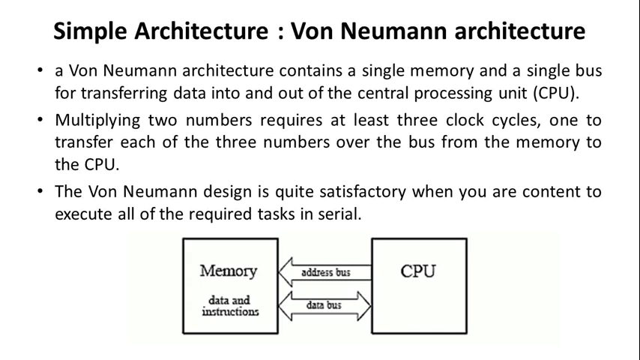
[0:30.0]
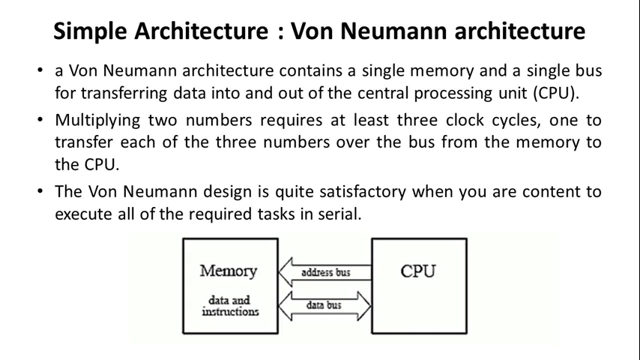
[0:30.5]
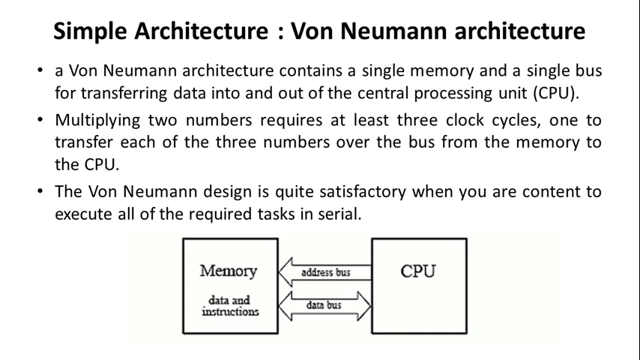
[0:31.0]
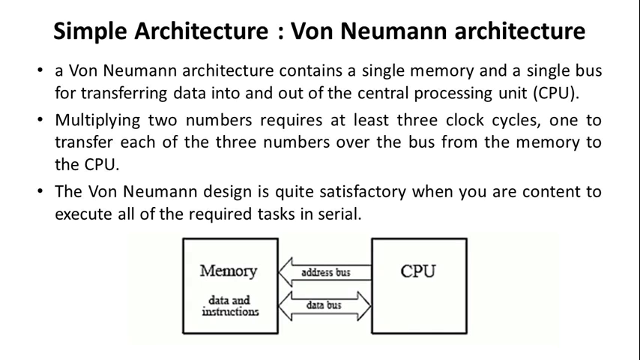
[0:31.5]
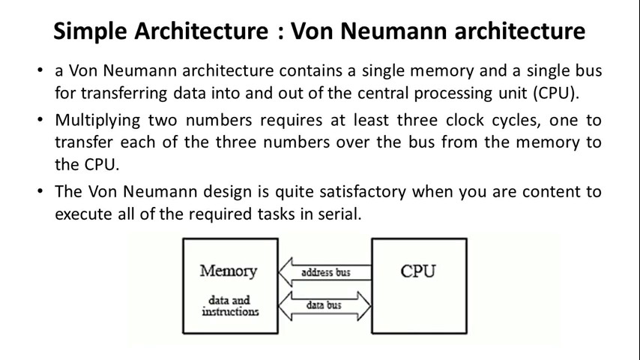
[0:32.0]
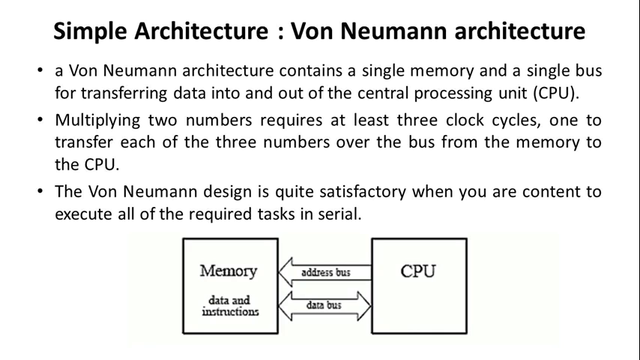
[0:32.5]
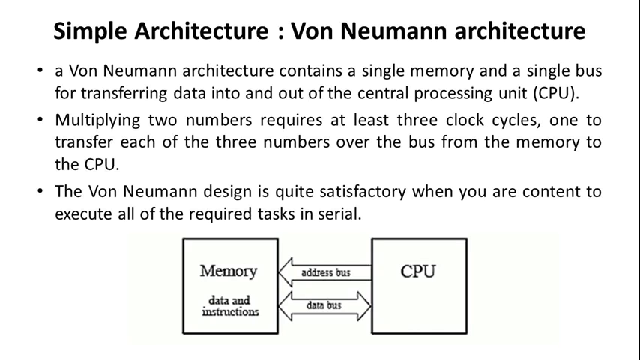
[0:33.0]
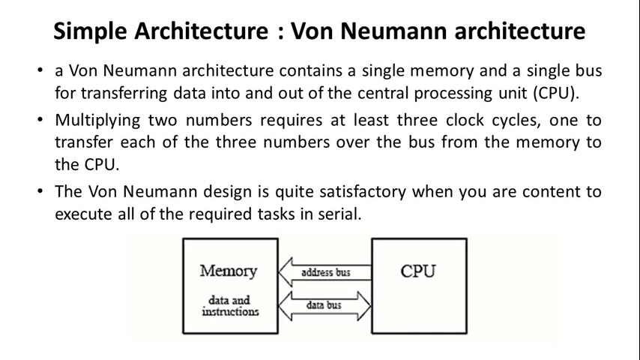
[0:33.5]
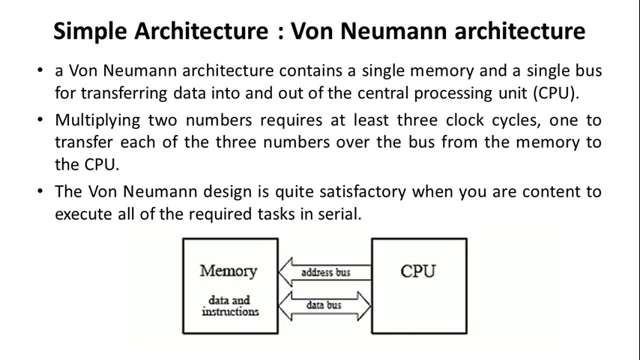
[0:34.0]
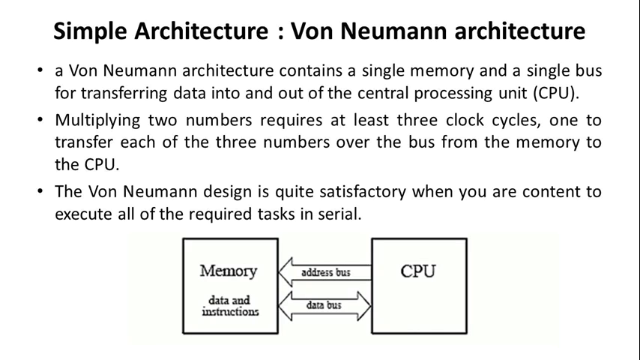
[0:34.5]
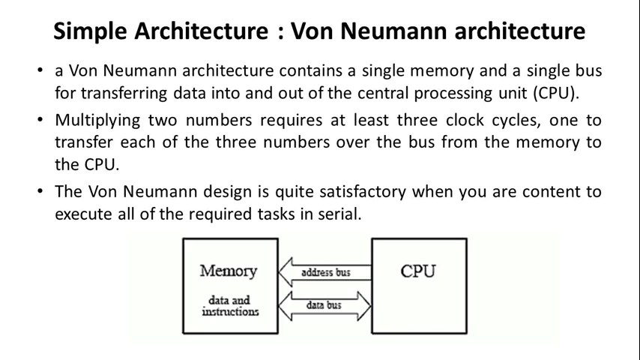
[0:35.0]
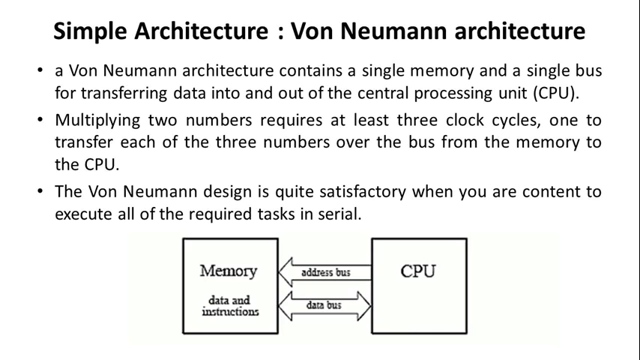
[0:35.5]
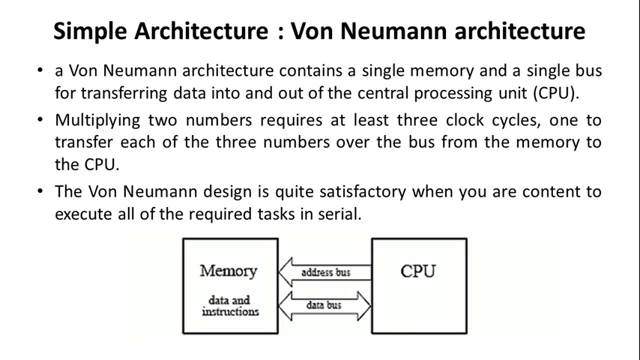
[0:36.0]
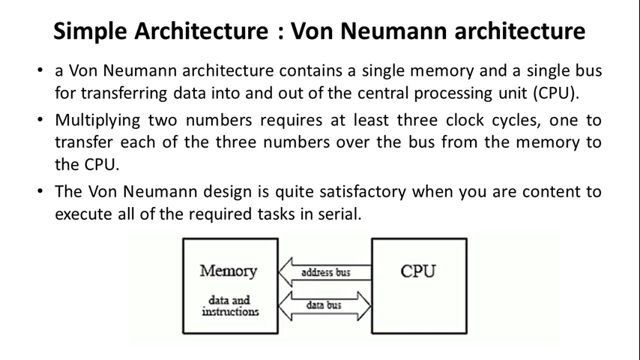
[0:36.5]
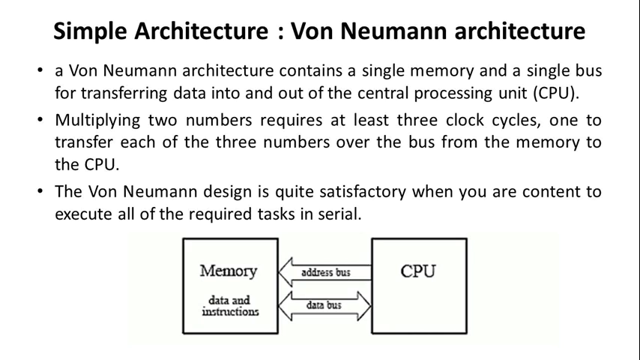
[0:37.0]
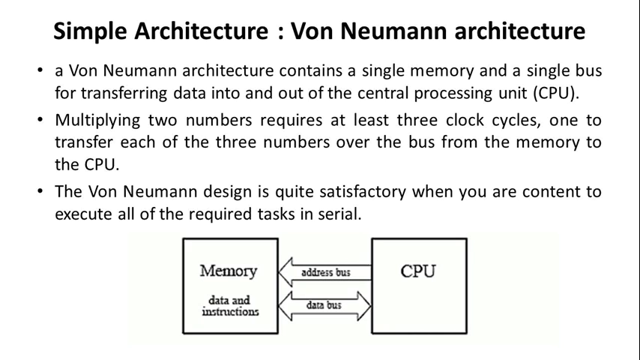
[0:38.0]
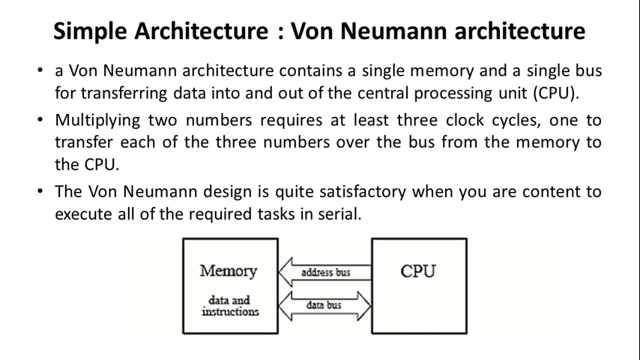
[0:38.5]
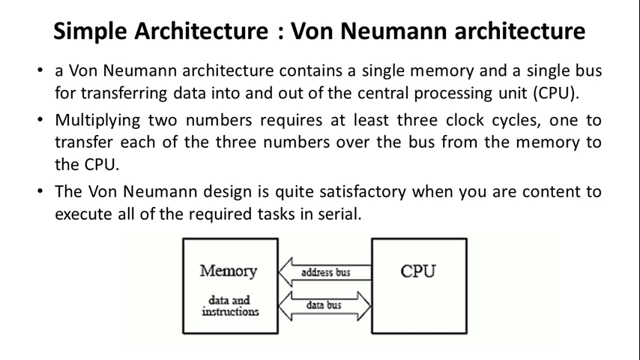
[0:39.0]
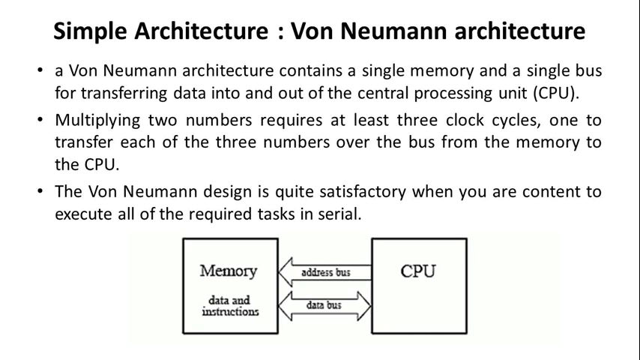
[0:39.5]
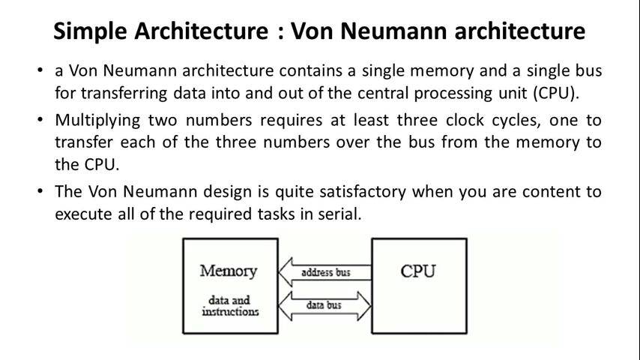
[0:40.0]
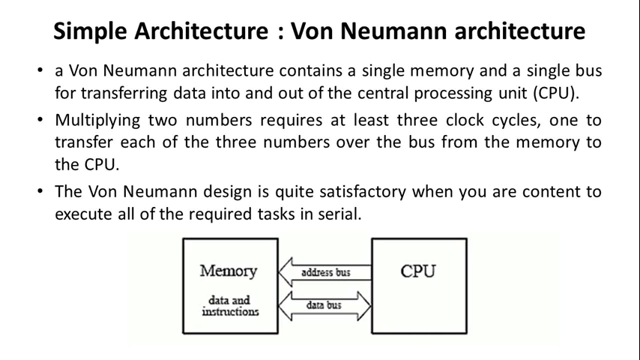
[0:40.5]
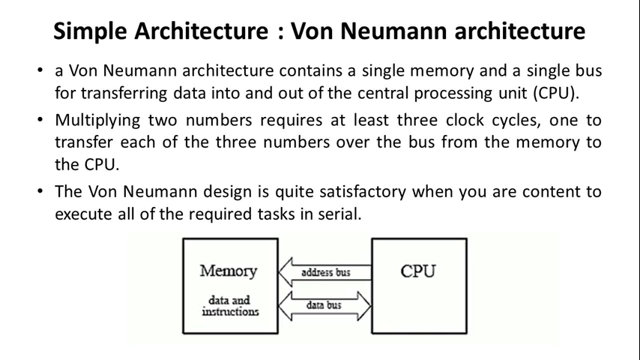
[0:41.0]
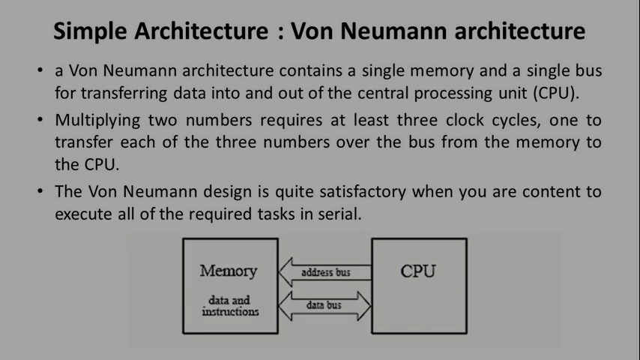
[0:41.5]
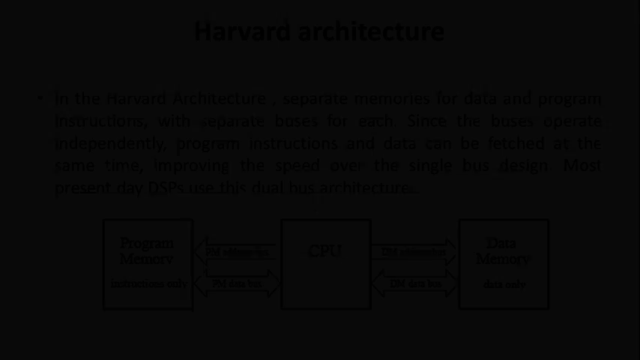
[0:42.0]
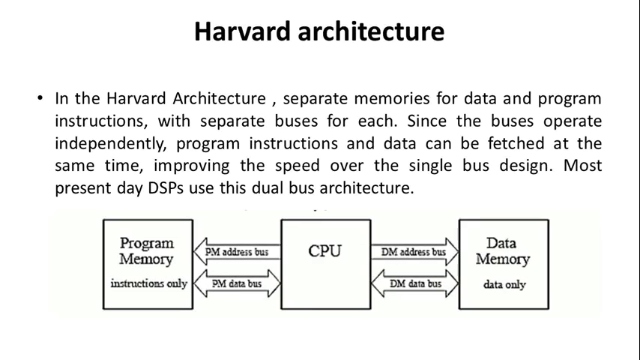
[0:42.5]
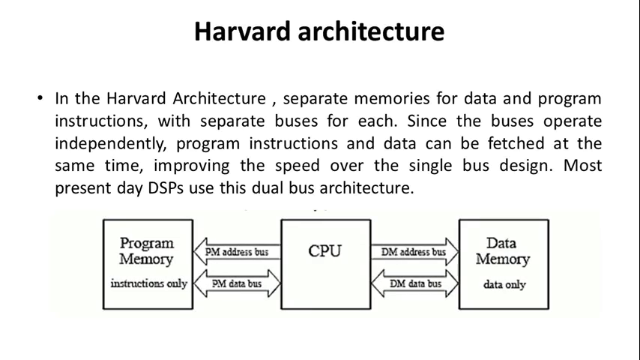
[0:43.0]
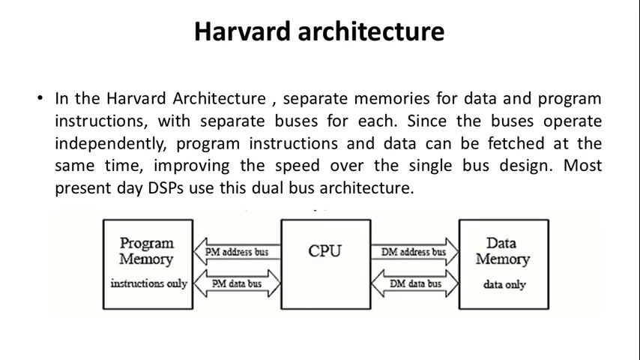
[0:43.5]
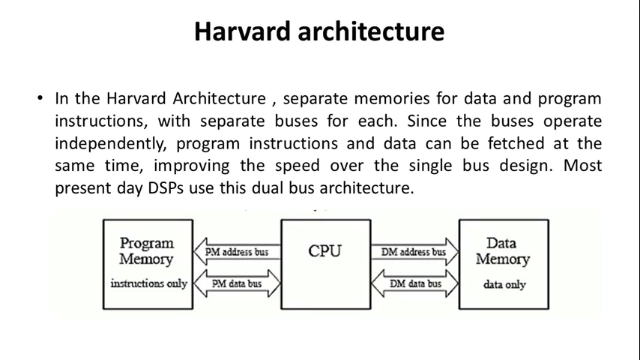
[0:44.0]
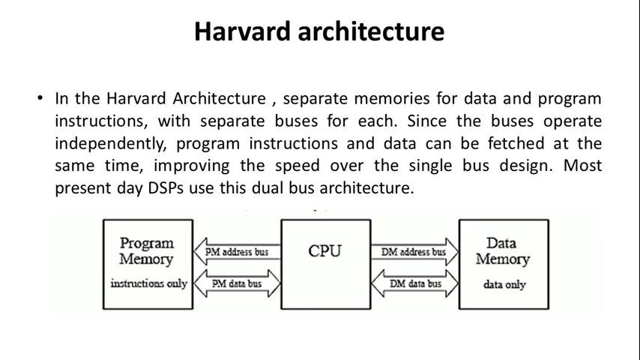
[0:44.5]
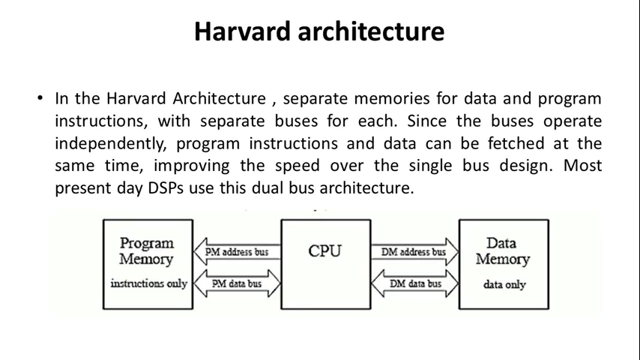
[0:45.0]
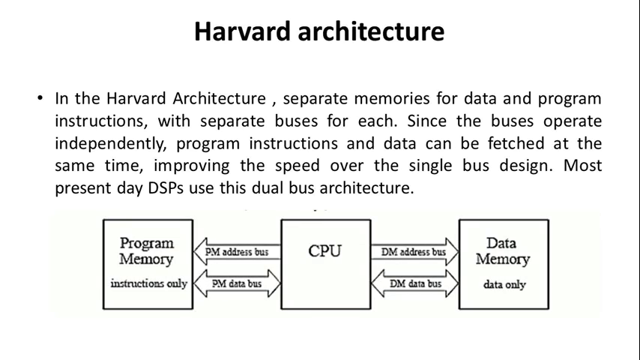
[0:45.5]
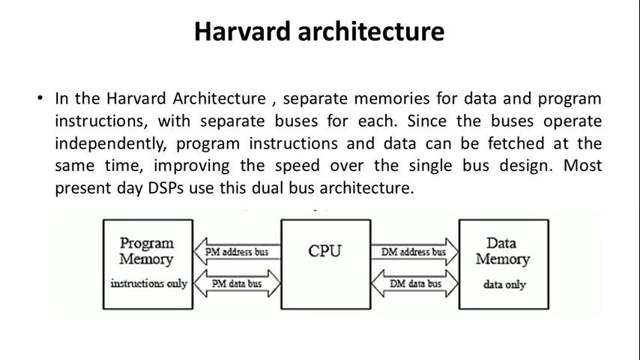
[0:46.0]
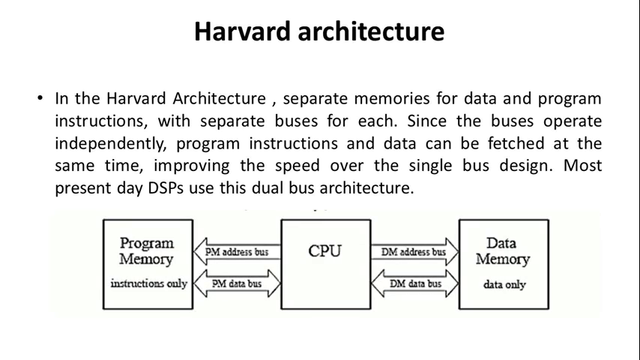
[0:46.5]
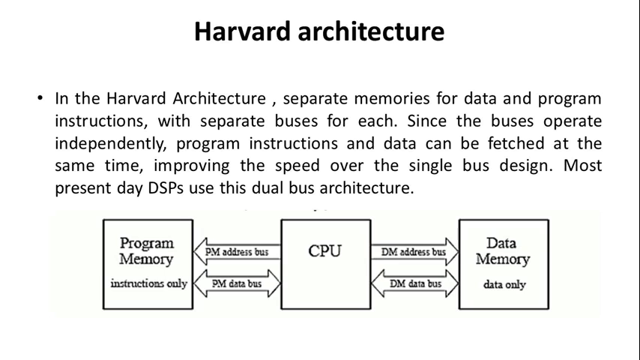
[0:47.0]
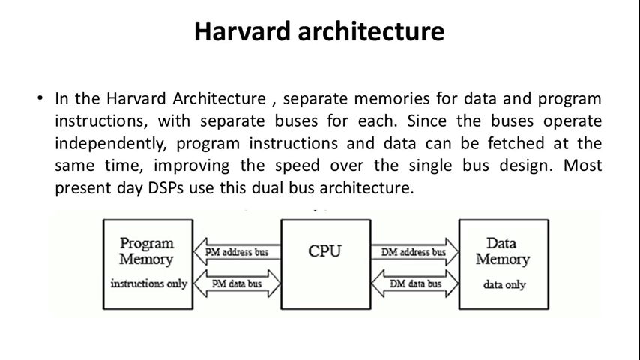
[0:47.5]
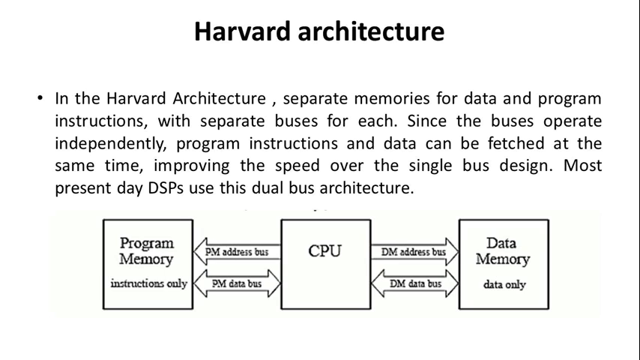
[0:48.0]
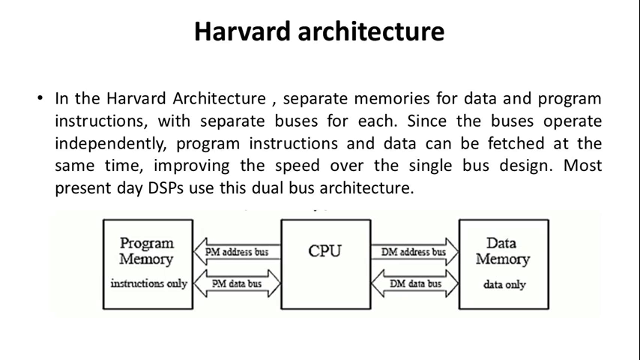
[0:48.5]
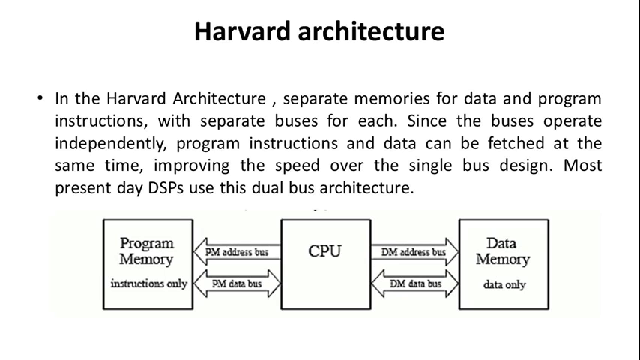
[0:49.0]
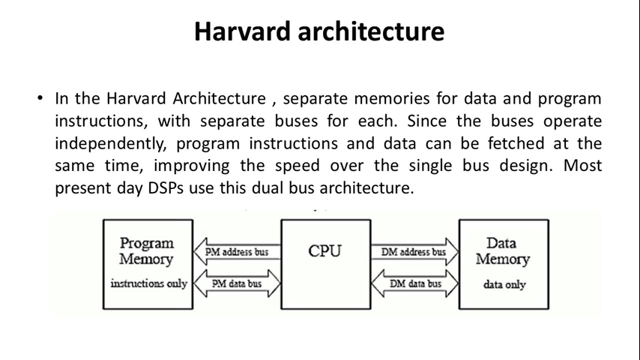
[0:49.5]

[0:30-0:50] Black text on a white background carries the title "Simple Architecture : Von Neumann Architecture." The text outlines what von Neumann architecture is, stating that it contains a single memory and a single bus for transferring data in and out of the CPU. It identifies the number of clock cycles required and what they are for, as well as when the design is satisfactory. A small image or diagram shows a CPU box and a memory box with arrows between them showing their relation. The screen then changes to more black text on a white background with the title "Harvard Architecture." It describes Harvard Architecture, stating that it separates memories for data and program instructions with separate buses for each, and gives more details on that. Another simple diagram, this time with three boxes, one labeled "Program Memory," one labeled "CPU," and one labeled "Data Memory," shows arrows between them.